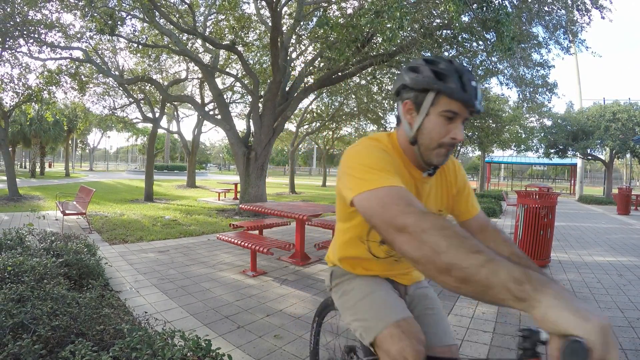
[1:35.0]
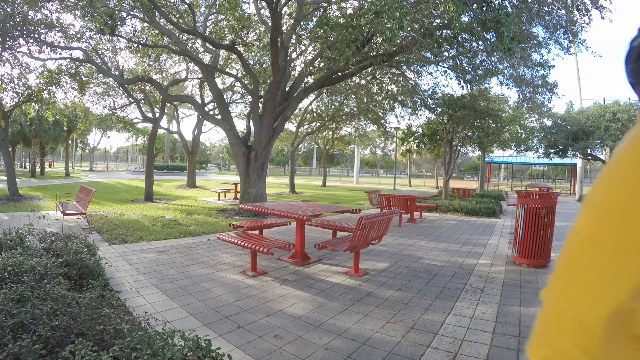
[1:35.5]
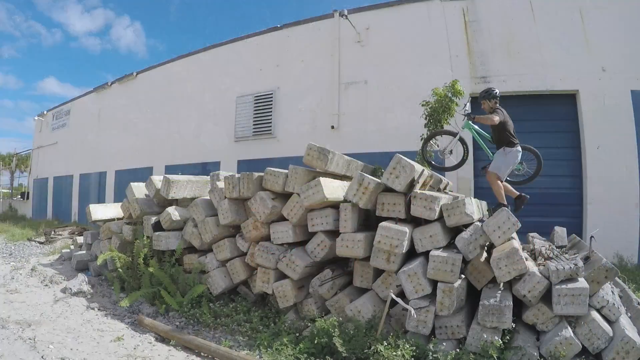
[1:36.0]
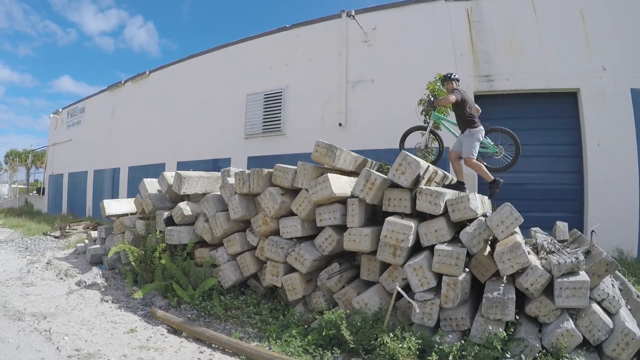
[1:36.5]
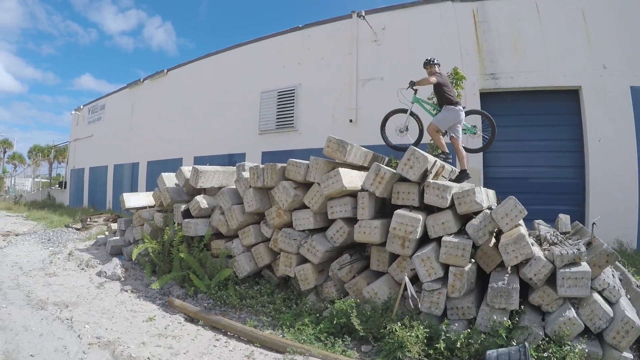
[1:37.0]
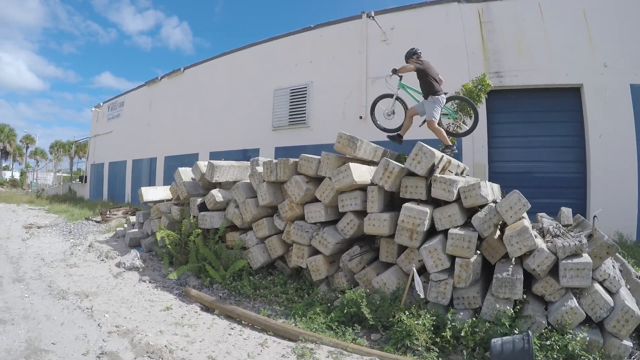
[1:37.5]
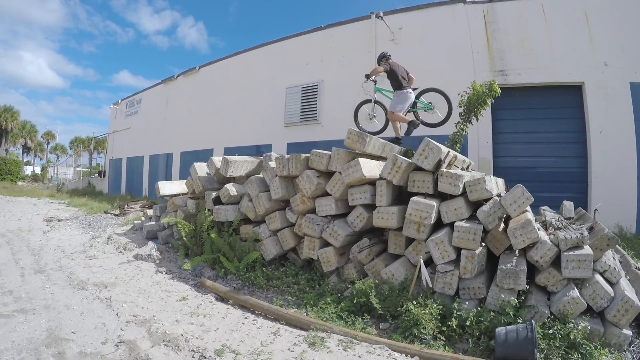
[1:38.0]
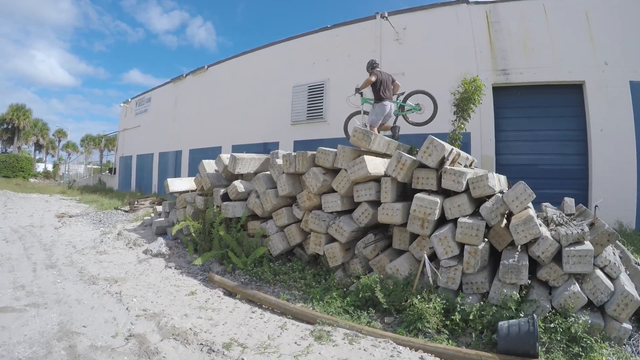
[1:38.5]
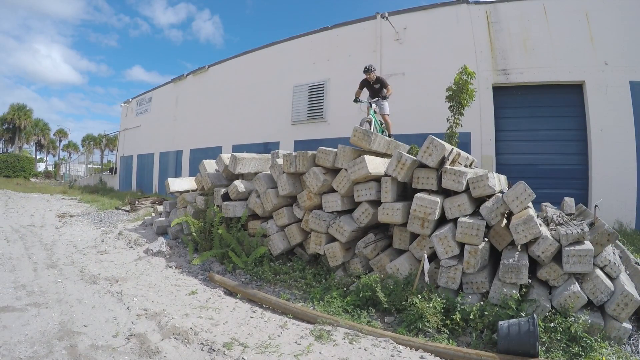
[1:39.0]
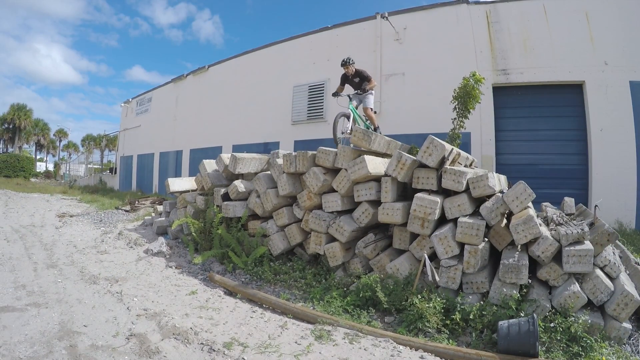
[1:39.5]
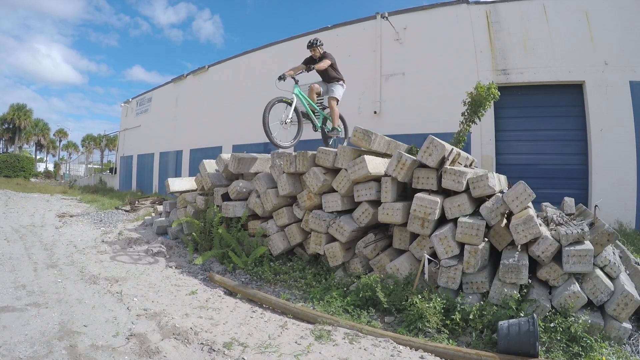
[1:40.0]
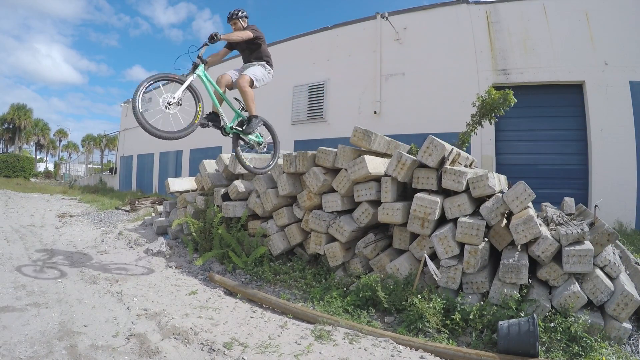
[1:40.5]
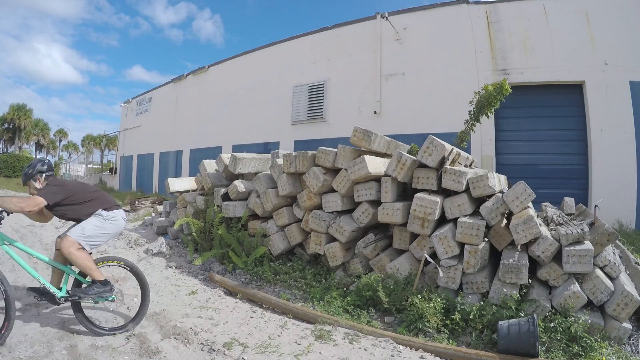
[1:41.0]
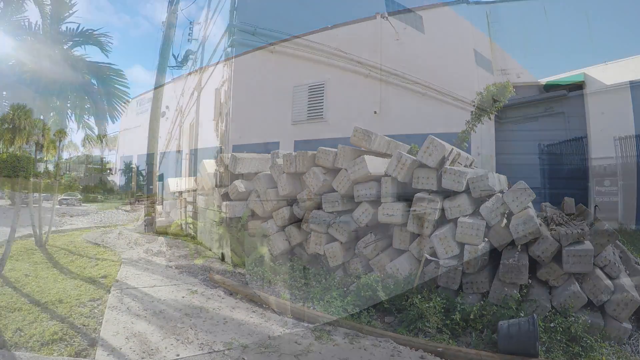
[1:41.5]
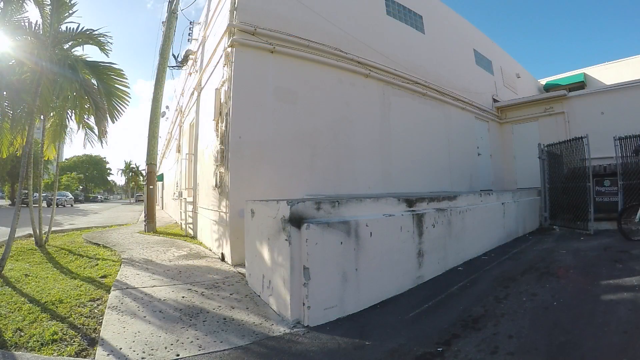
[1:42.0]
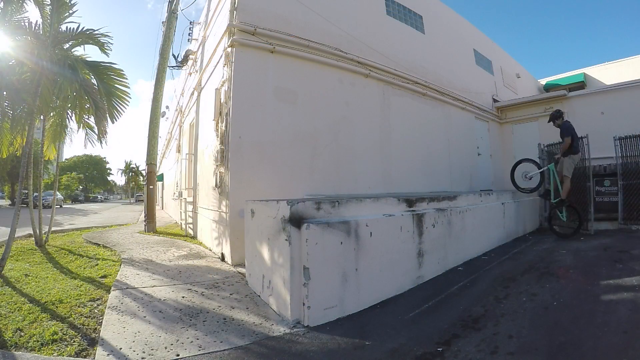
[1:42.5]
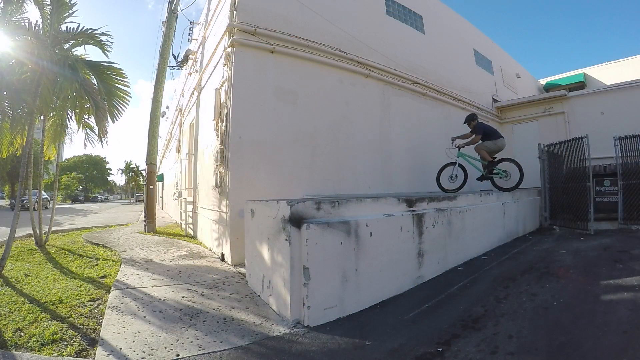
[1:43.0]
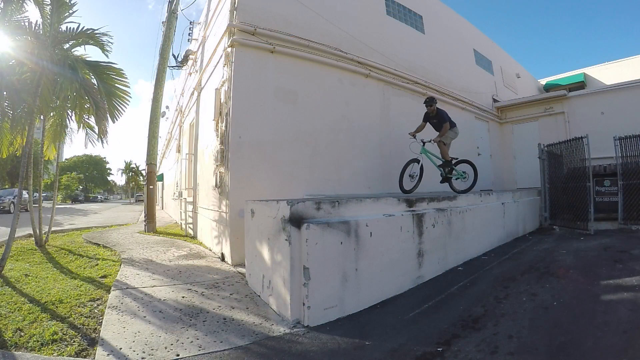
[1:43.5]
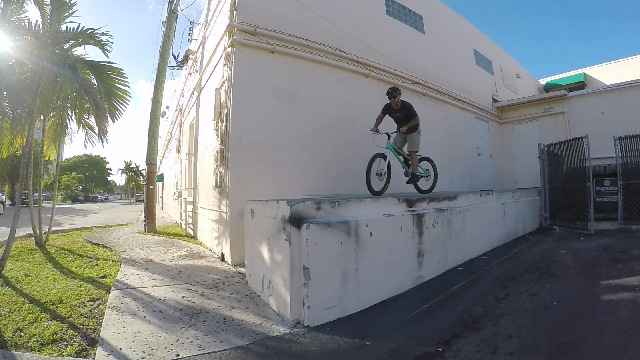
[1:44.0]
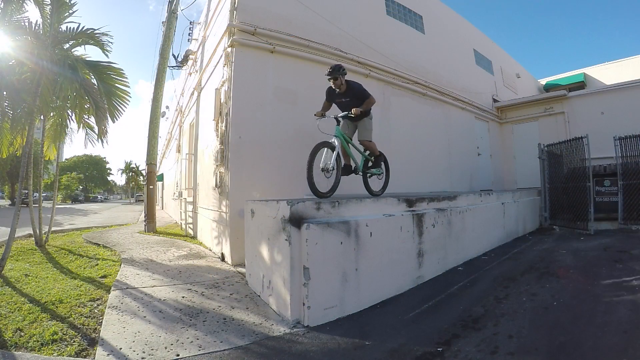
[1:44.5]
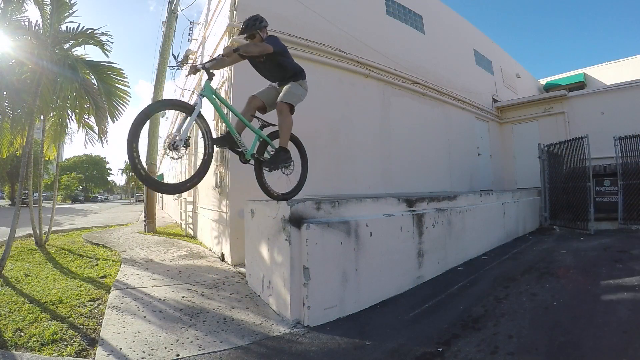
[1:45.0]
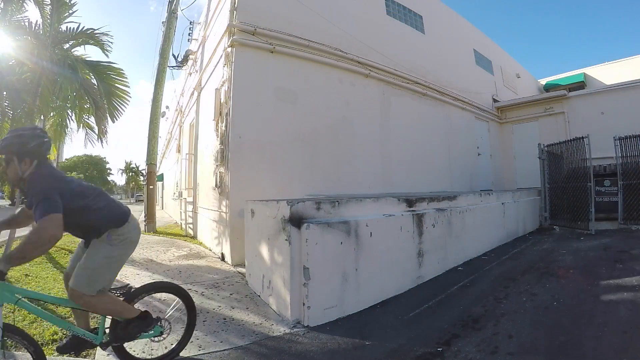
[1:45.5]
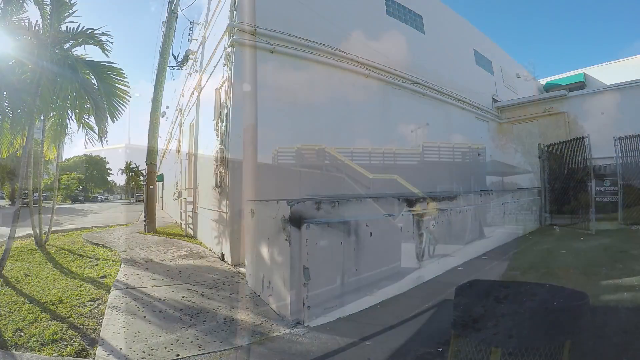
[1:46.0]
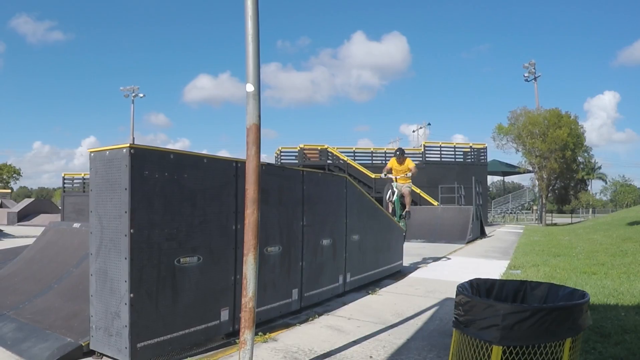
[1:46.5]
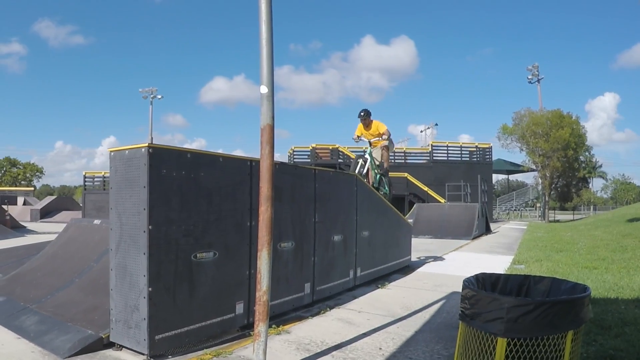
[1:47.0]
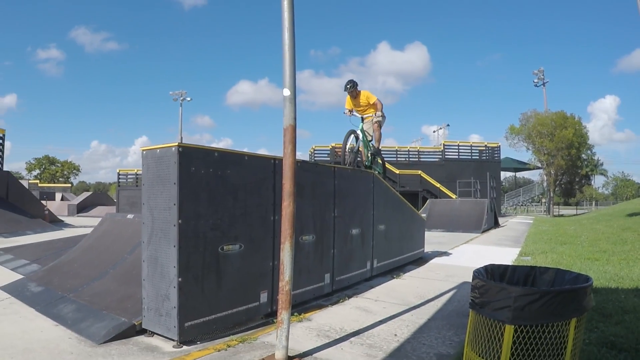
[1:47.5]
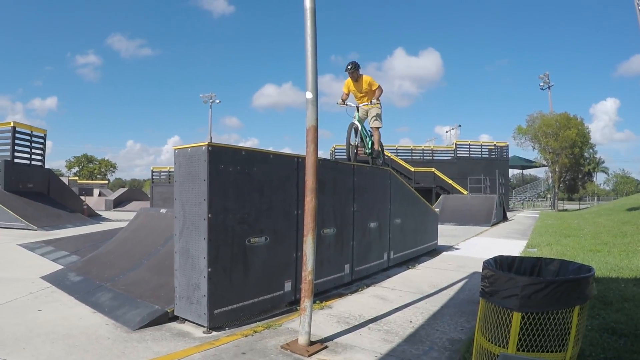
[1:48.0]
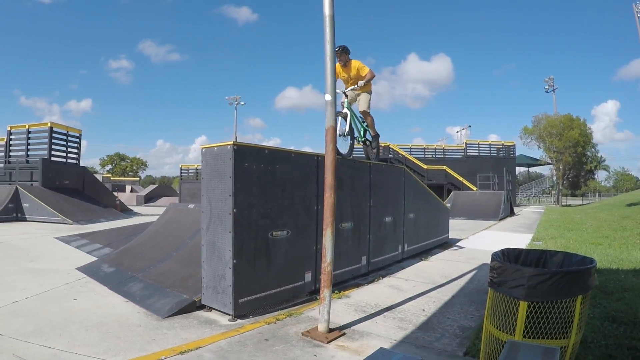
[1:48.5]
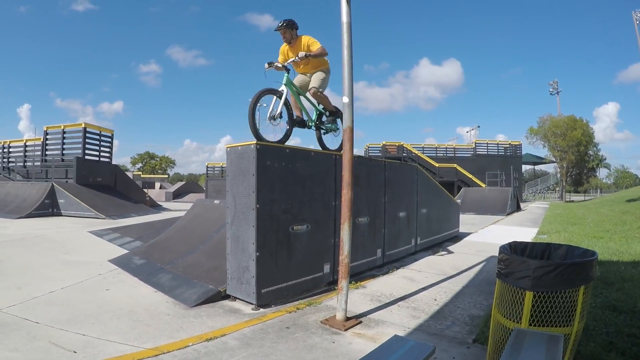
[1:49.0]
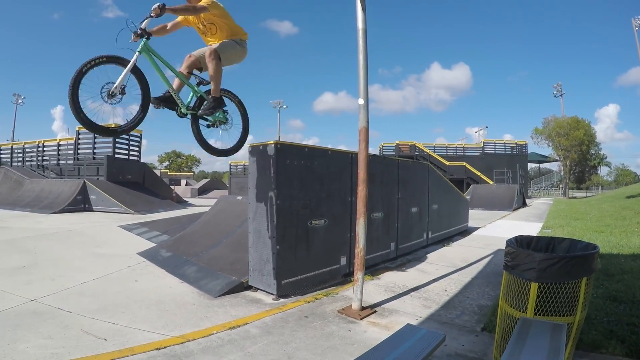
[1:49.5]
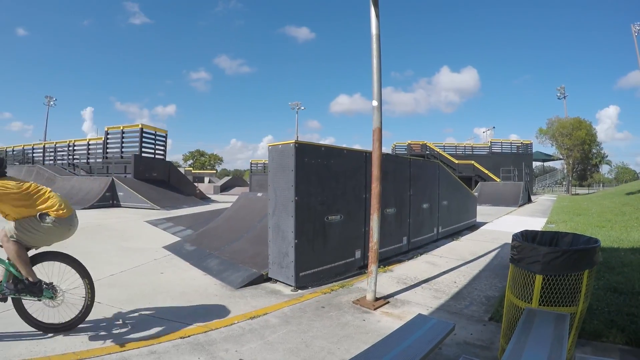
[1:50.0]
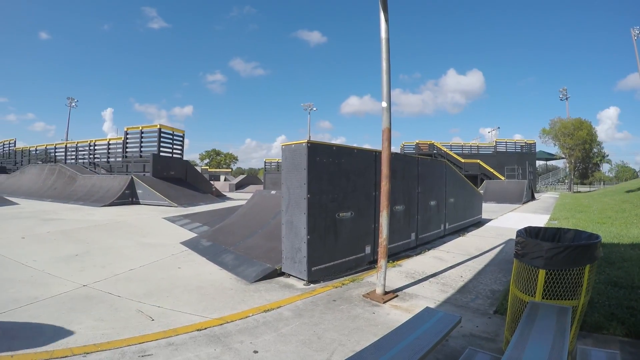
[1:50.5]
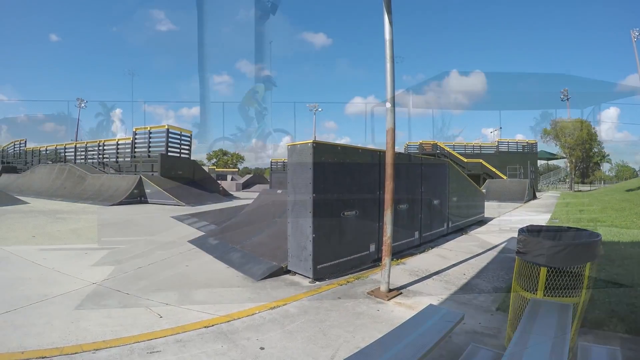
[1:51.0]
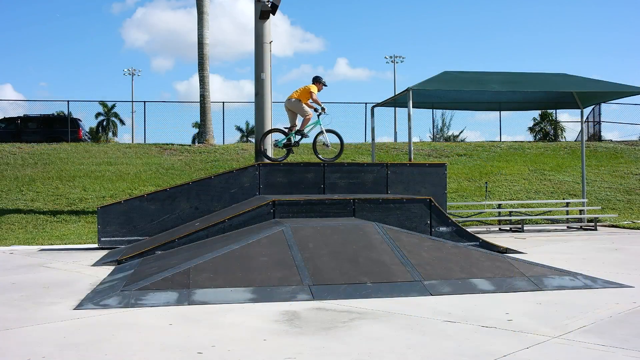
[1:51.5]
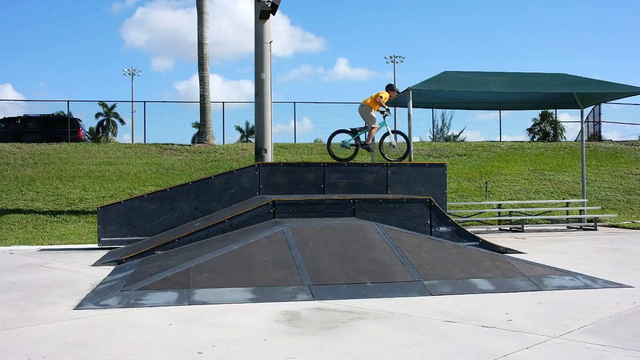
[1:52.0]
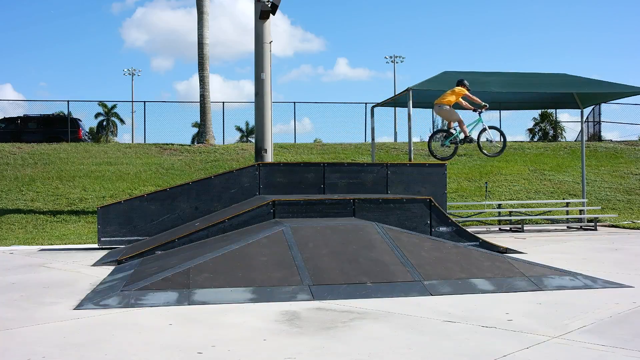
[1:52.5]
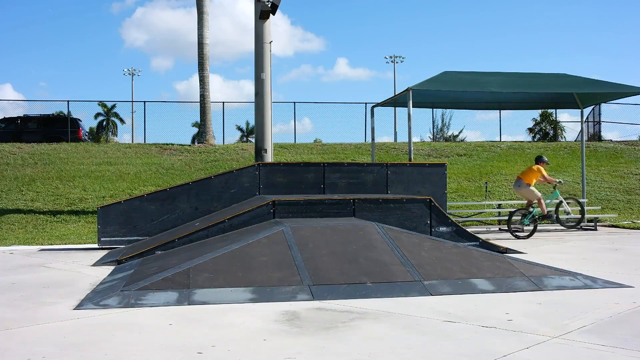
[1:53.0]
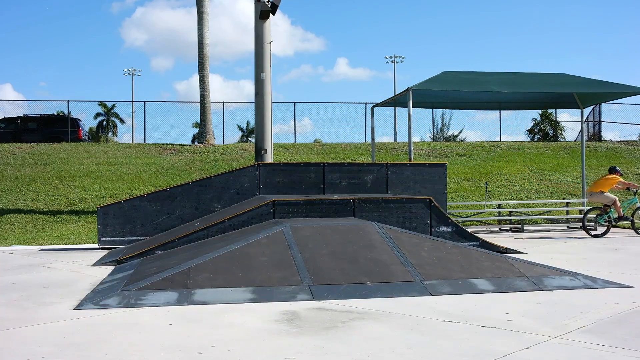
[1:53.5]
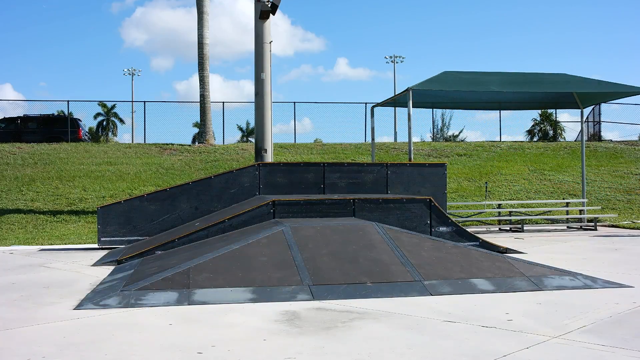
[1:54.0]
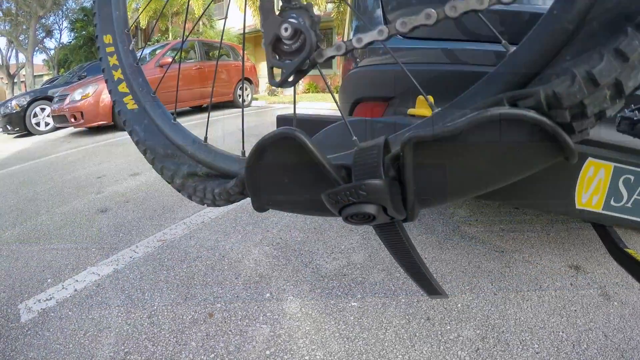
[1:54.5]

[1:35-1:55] A montage shows a man on a bicycle jumping off different obstacles. He jumps up onto a concrete wall approximately 4 to 5 feet high, traverses it, and jumps to the ground onto concrete pavement. He also jumps from a large ramp approximately 10 to 14 feet high. He walks up a series of concrete pallets with the bike and then, on the bike, jumps down from them; they appear to be about 14 to 17 feet high.